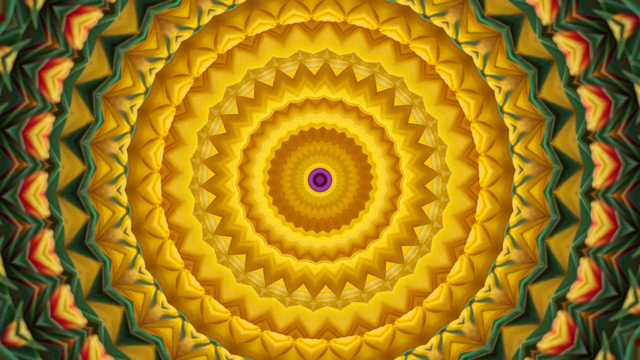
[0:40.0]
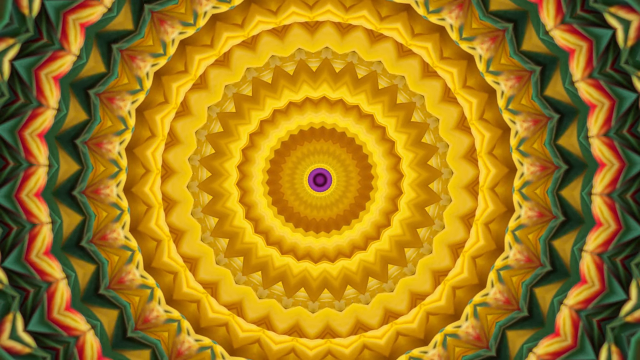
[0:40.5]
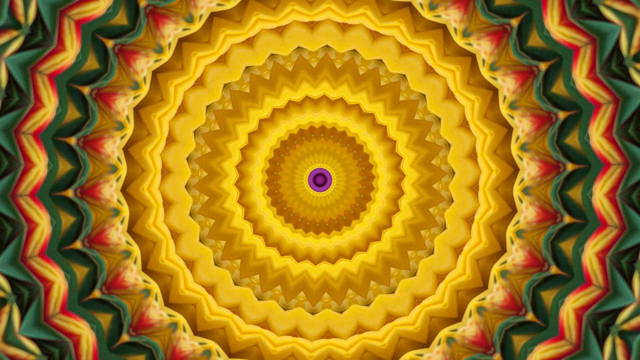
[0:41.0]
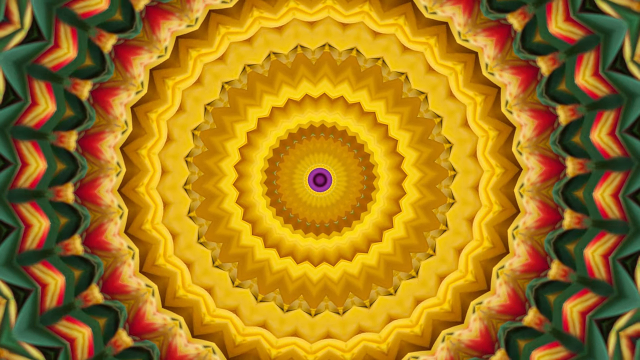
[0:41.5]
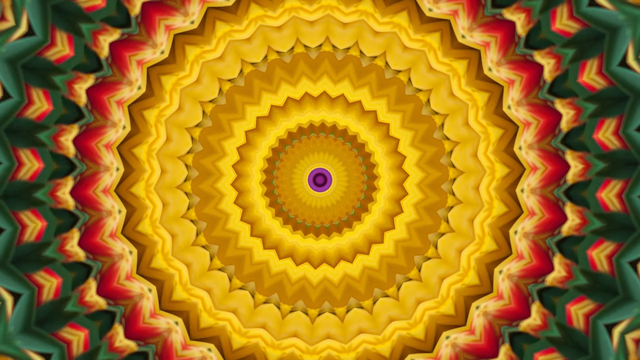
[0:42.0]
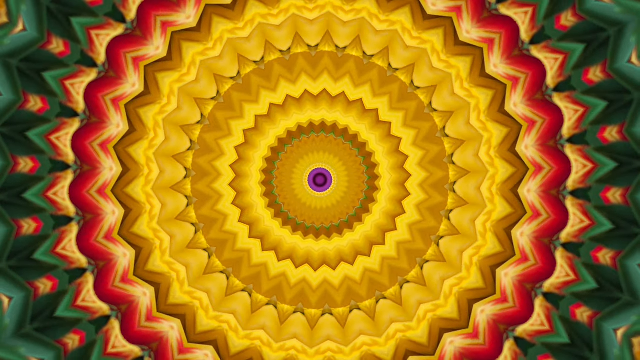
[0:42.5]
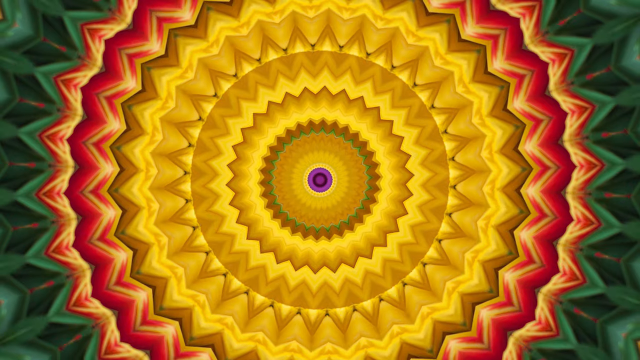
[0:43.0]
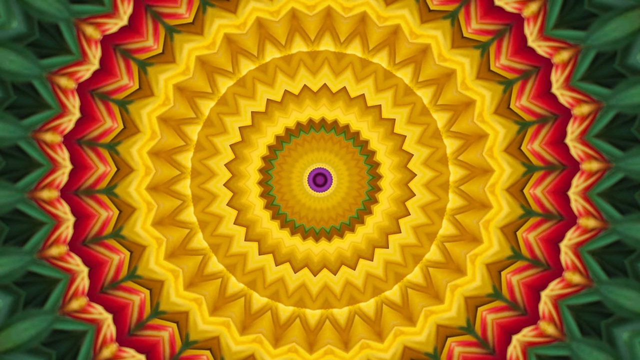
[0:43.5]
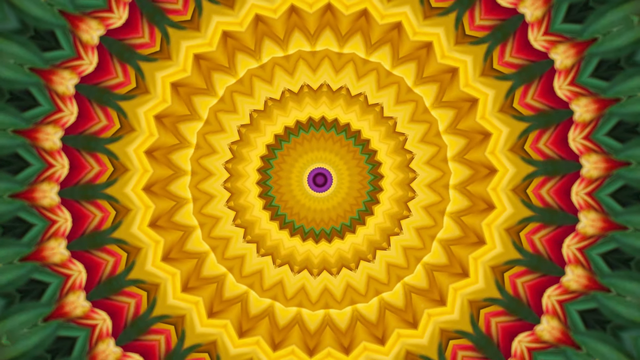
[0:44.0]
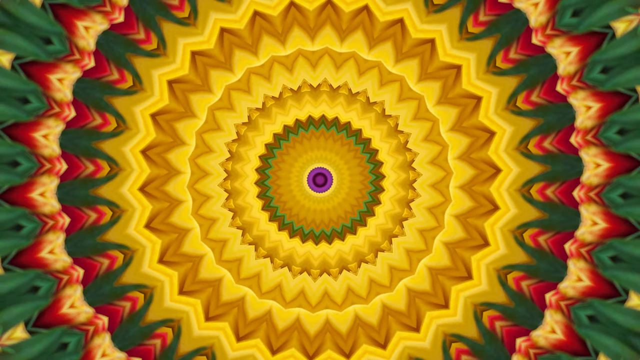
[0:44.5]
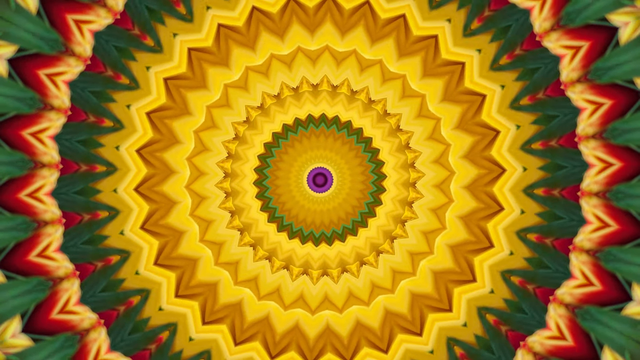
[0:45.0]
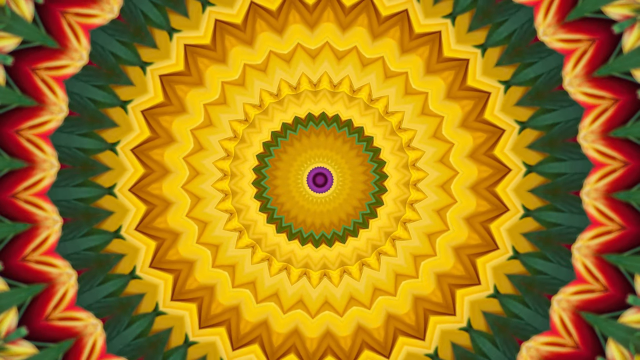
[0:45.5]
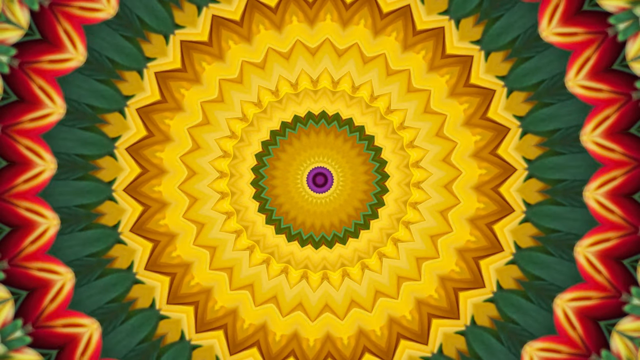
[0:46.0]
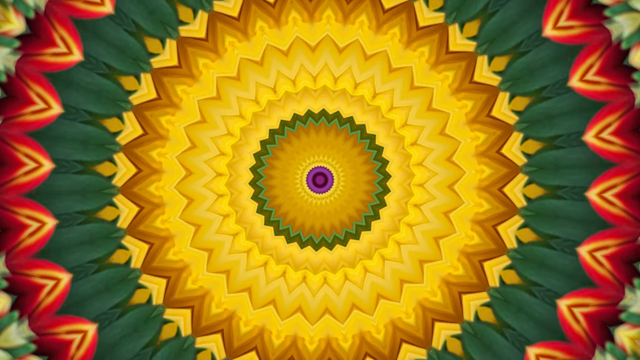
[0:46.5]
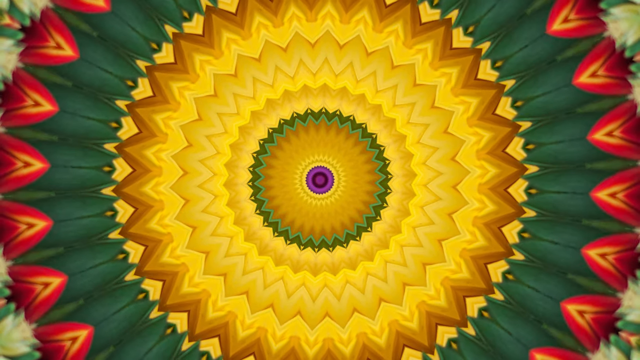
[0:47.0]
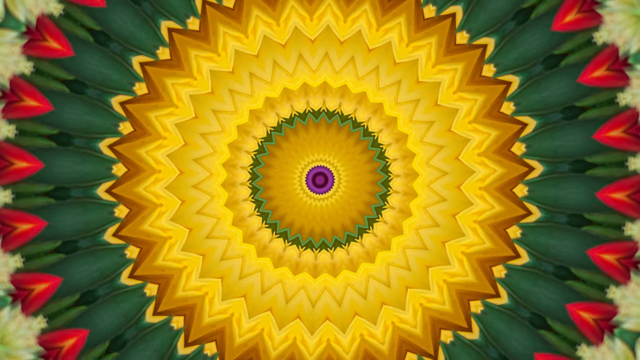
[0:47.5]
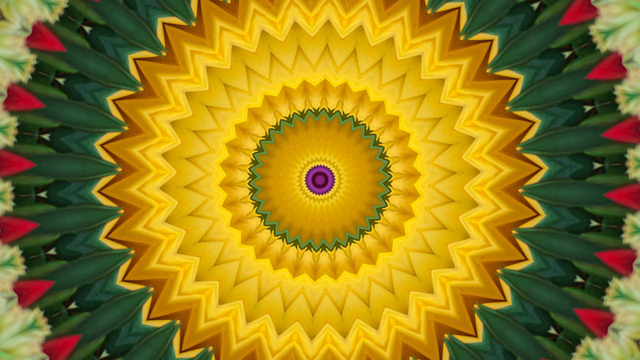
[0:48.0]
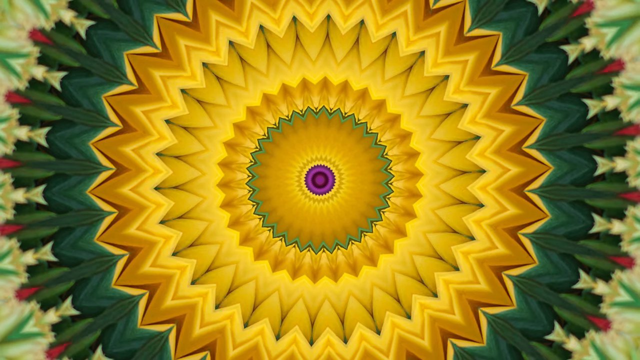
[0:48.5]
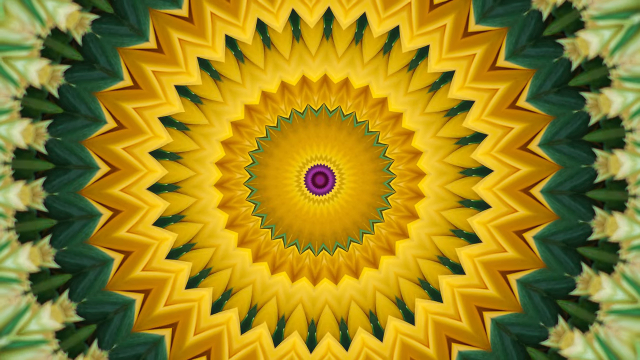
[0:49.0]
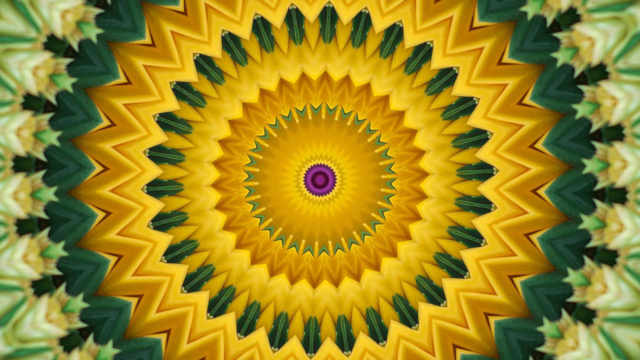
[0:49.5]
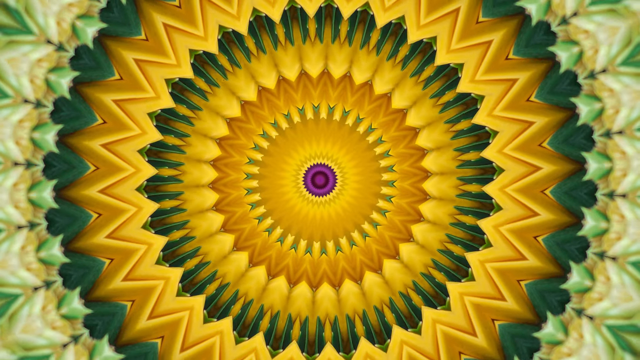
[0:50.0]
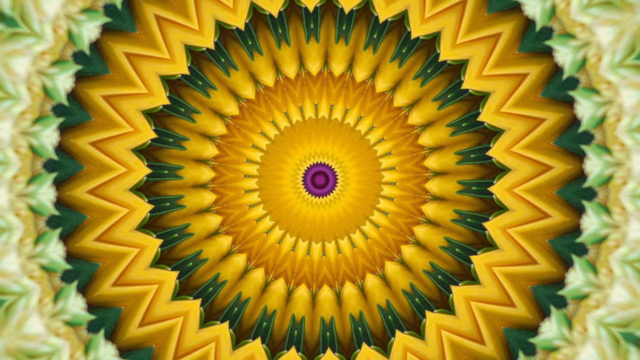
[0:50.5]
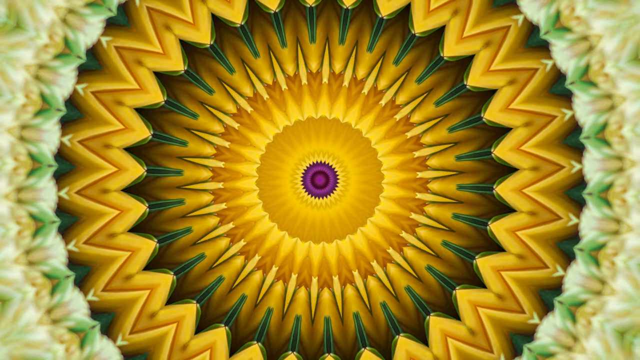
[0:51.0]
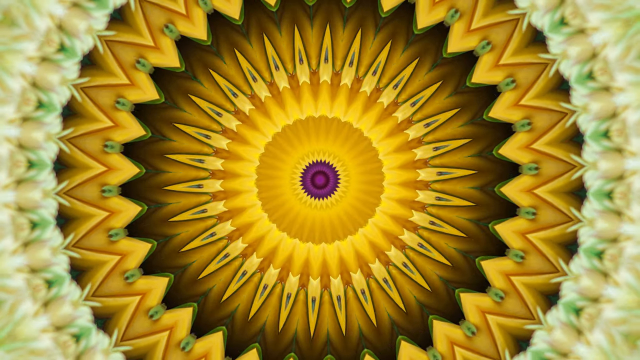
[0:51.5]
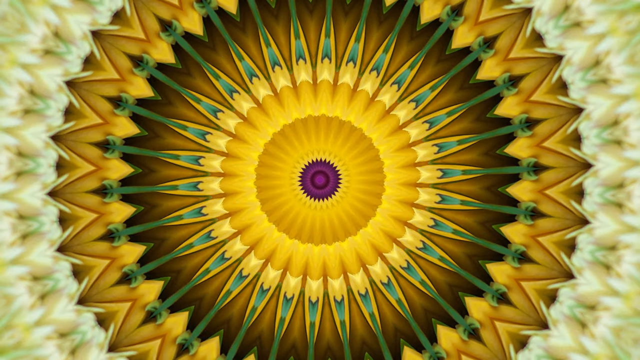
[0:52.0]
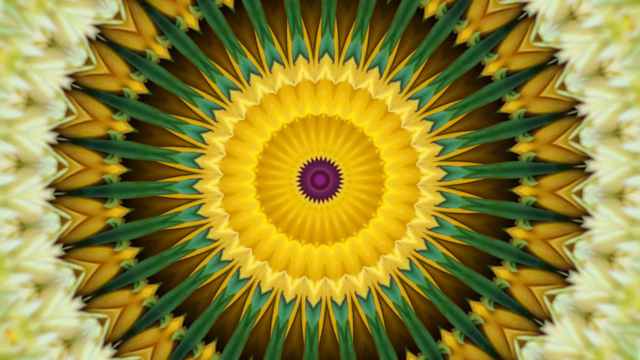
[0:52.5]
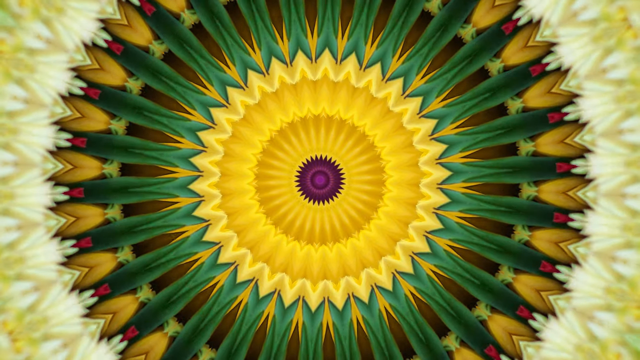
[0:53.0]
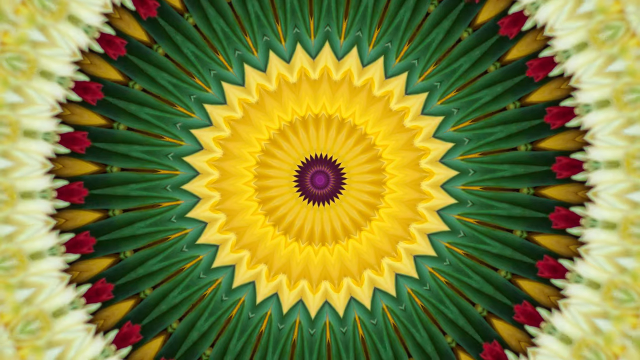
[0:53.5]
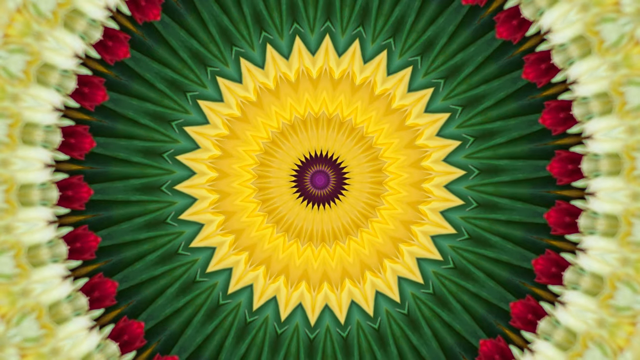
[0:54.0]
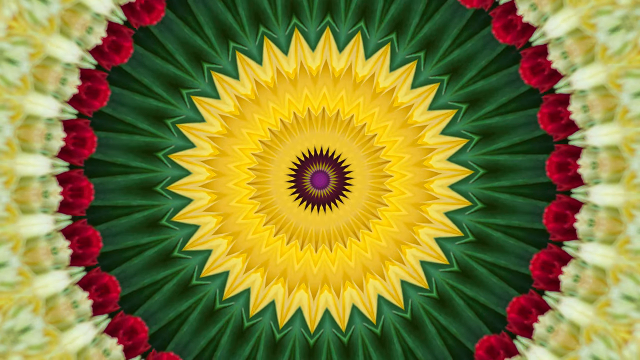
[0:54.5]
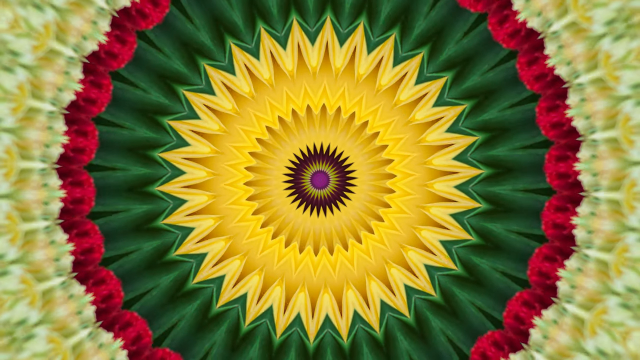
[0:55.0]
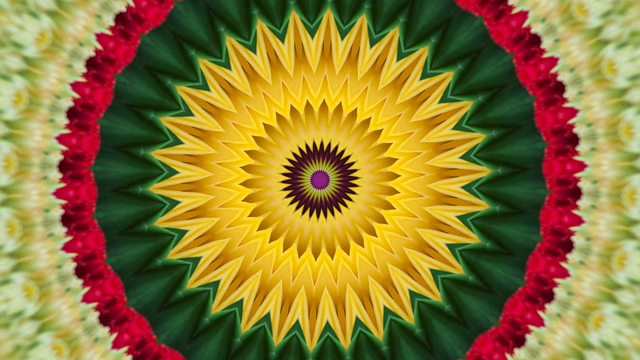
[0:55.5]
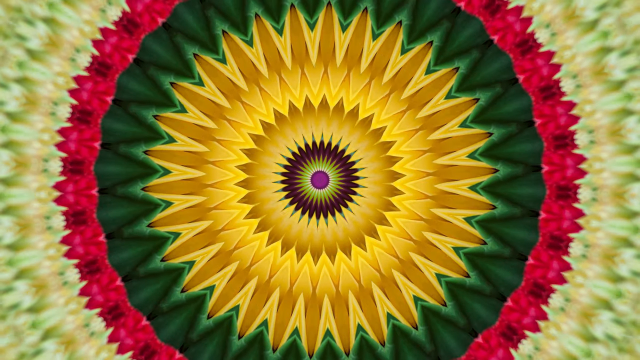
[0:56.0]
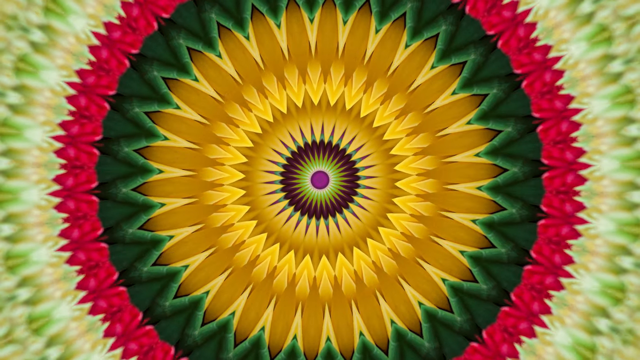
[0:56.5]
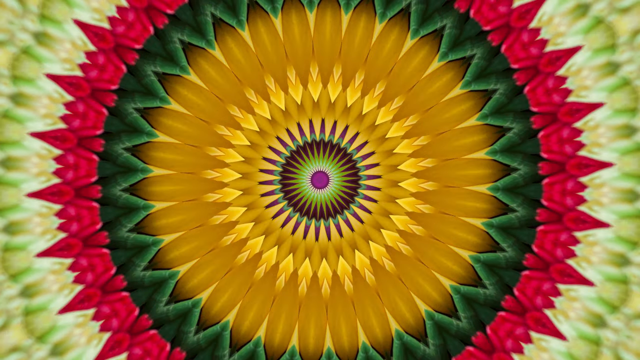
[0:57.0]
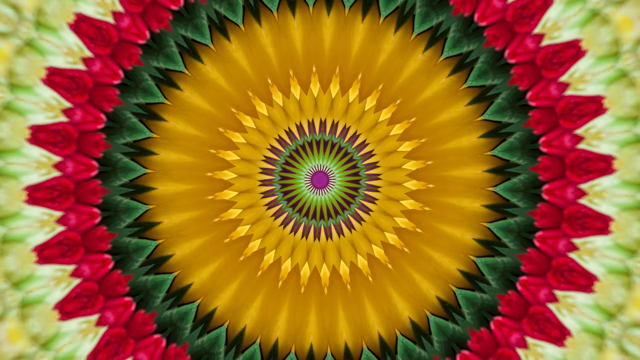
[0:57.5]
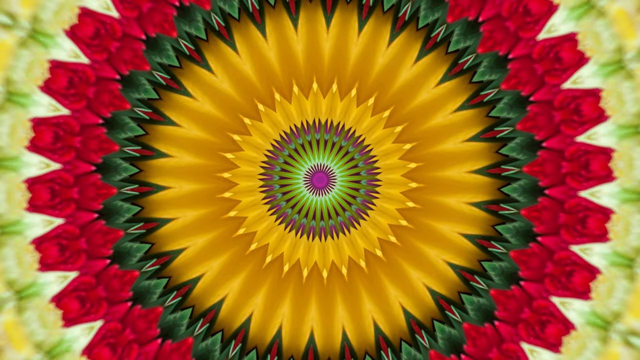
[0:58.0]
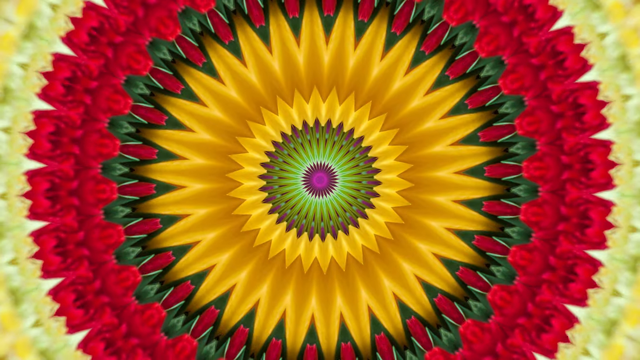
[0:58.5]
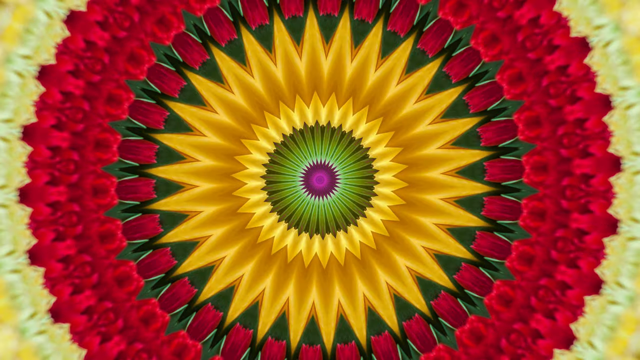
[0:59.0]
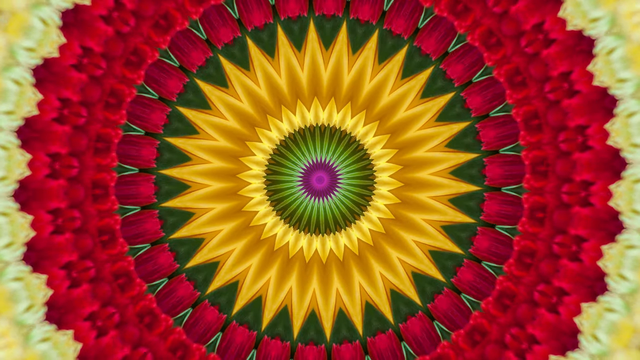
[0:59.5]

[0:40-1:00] The purple part in the center has shrunk to almost a single dot in the center of the moving mandala, kaleidoscope-like image. The majority of the image is mostly gold and yellow tones, while some dark green and reddish colors begin to form on the outside. At certain points it almost looks like a sunflower, with sharp pointed lines and dark golden colors bordered by brighter yellow. Arrow-like formations appear in the yellow and red parts of the outer ring. The red parts become bigger before dissolving, and the image seems to be zooming in. A mint green and a tannish color appear on the sides of the image. The purple in the center seems to grow larger, and lots of red comes onto the screen, forming various shapes and designs.